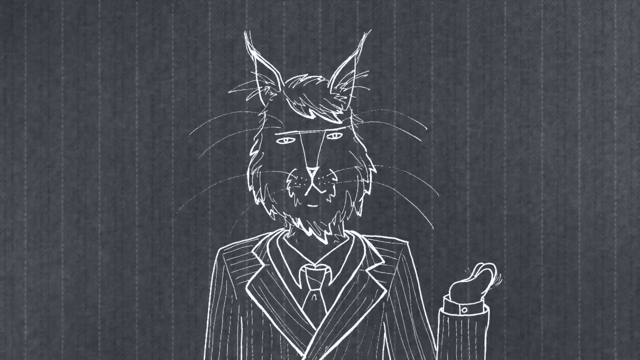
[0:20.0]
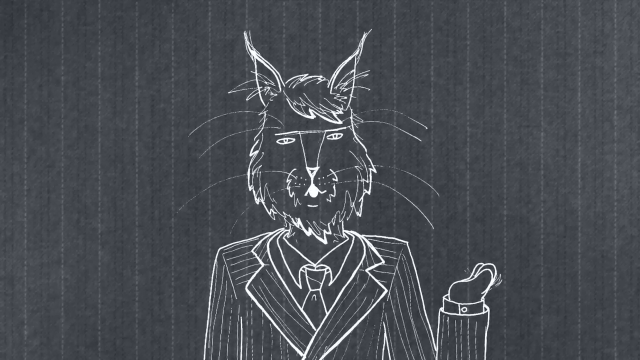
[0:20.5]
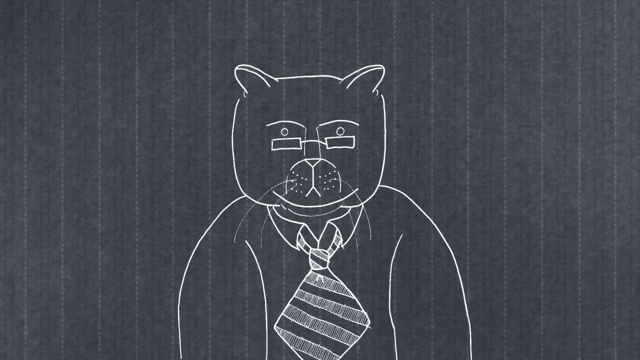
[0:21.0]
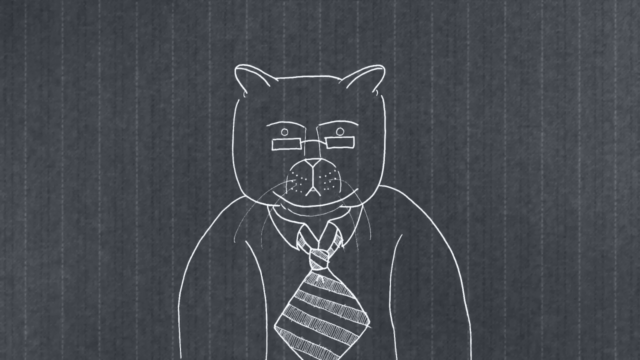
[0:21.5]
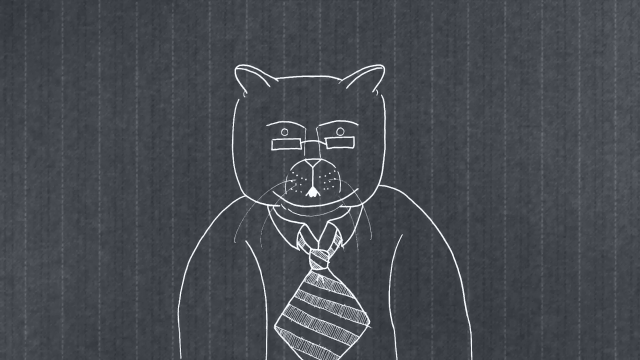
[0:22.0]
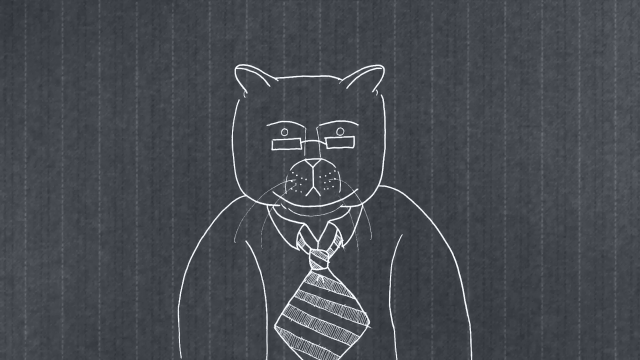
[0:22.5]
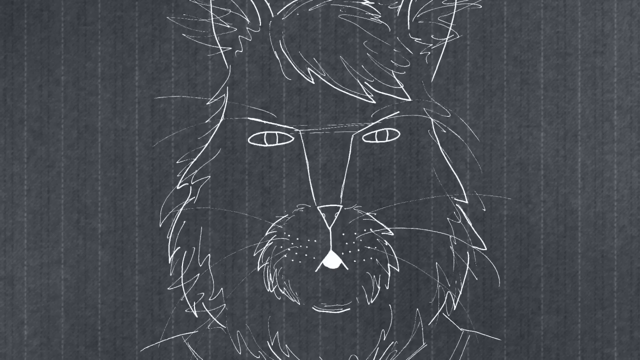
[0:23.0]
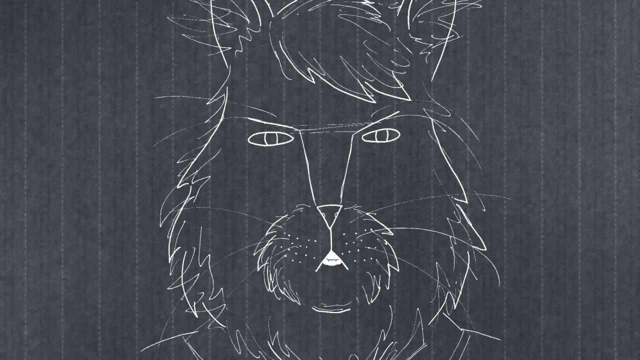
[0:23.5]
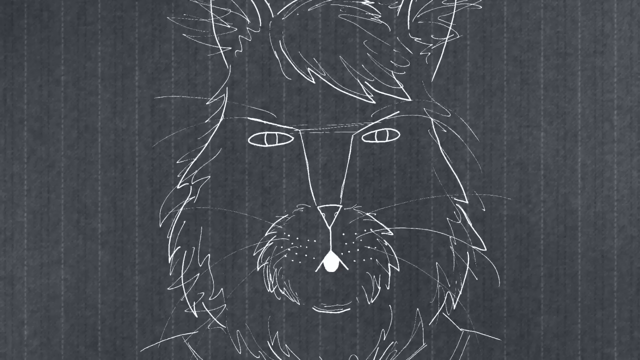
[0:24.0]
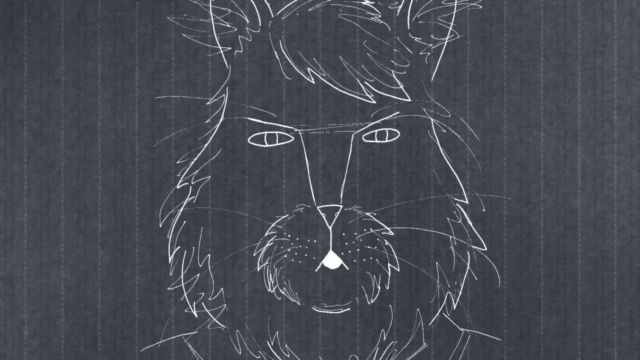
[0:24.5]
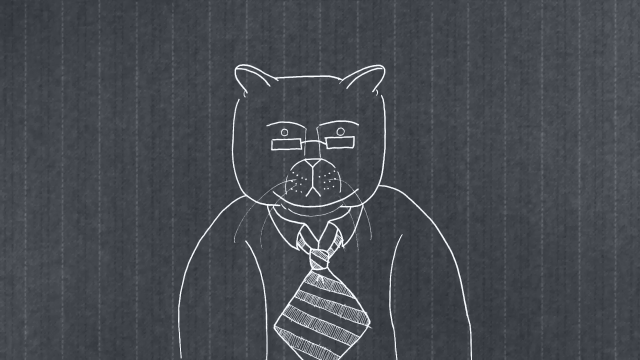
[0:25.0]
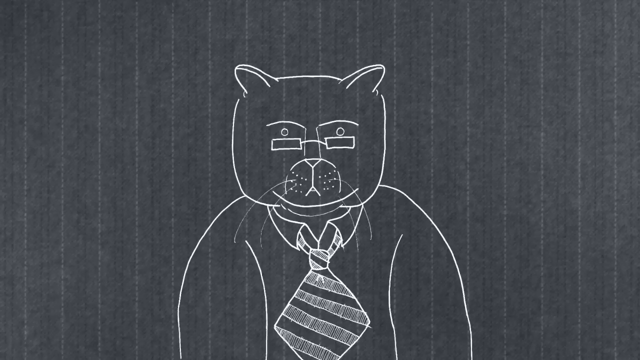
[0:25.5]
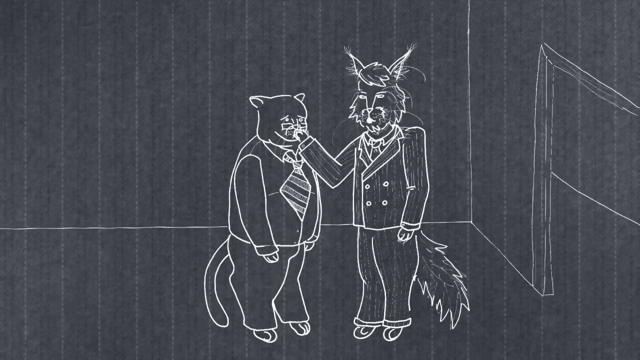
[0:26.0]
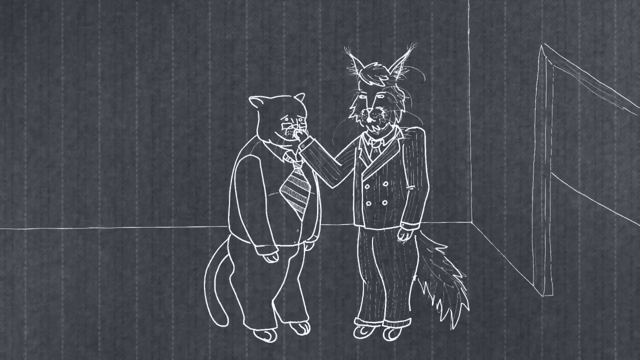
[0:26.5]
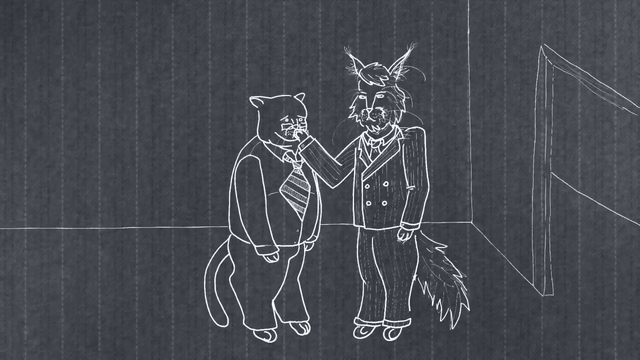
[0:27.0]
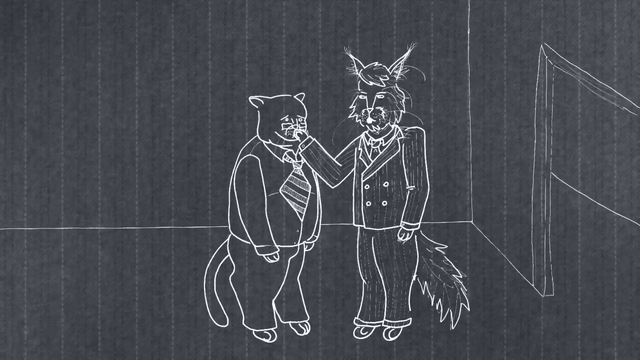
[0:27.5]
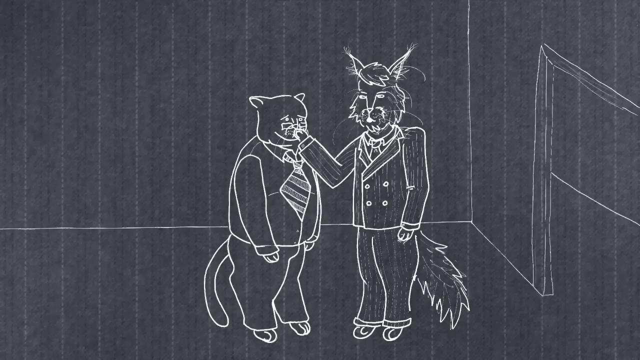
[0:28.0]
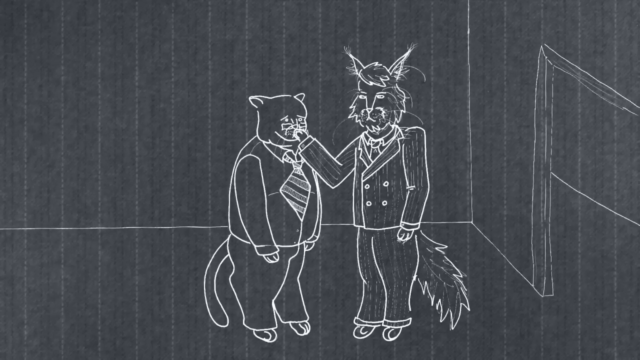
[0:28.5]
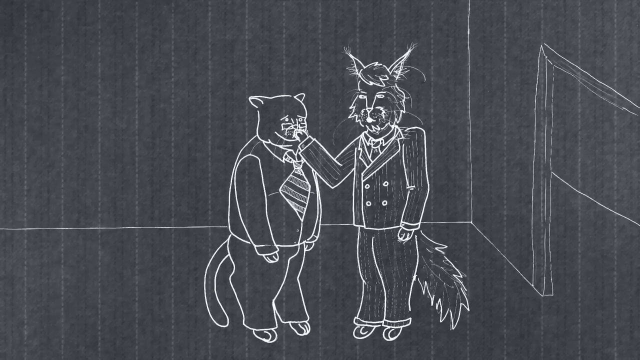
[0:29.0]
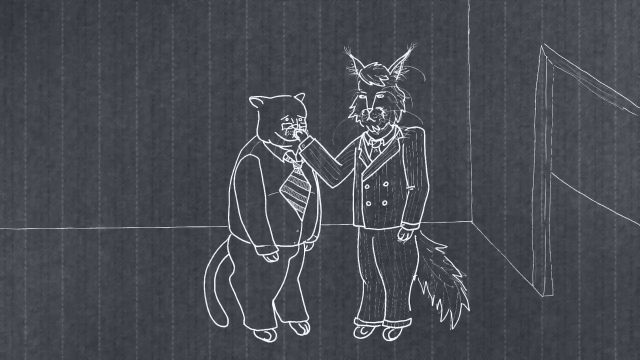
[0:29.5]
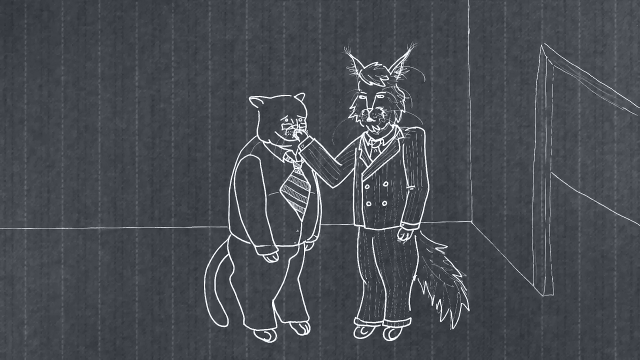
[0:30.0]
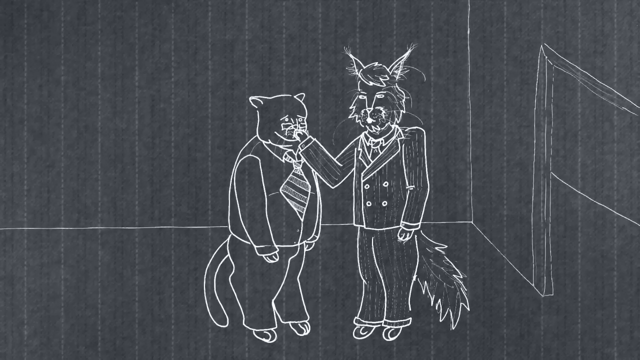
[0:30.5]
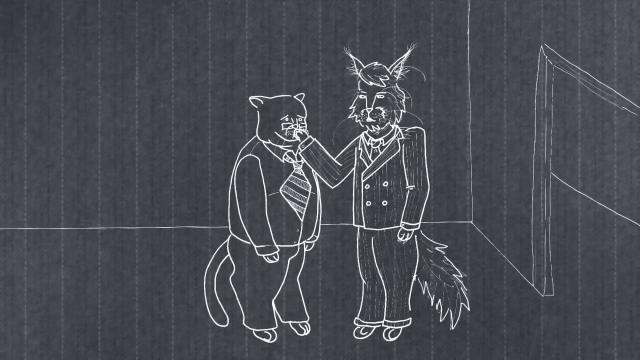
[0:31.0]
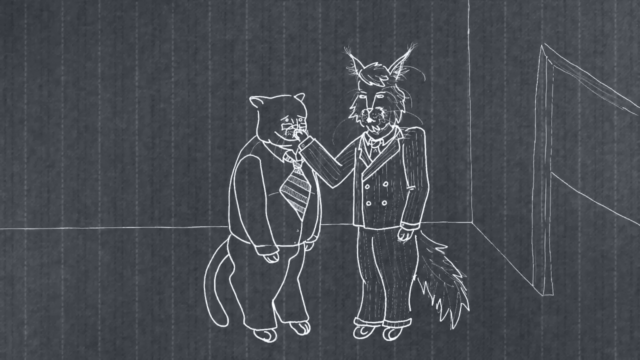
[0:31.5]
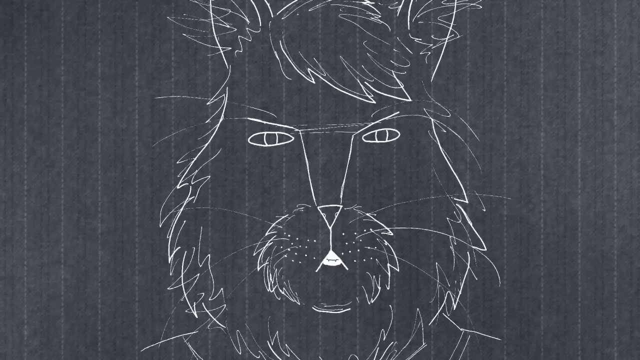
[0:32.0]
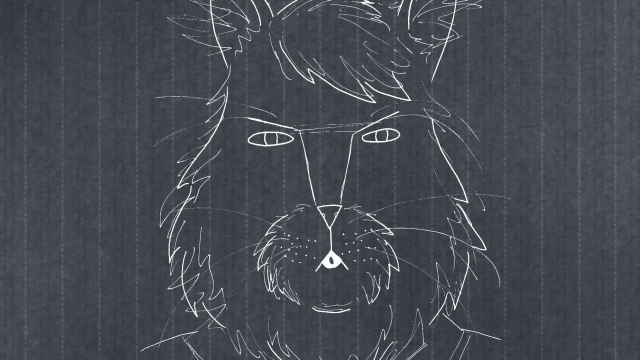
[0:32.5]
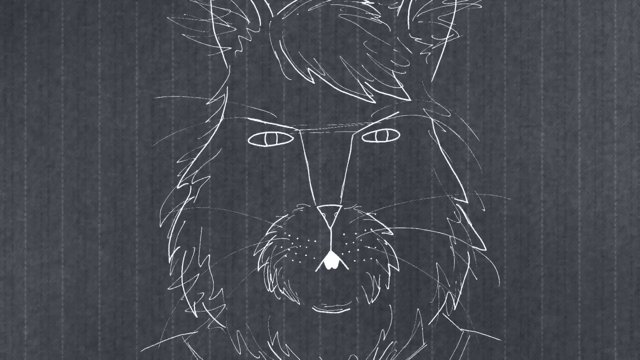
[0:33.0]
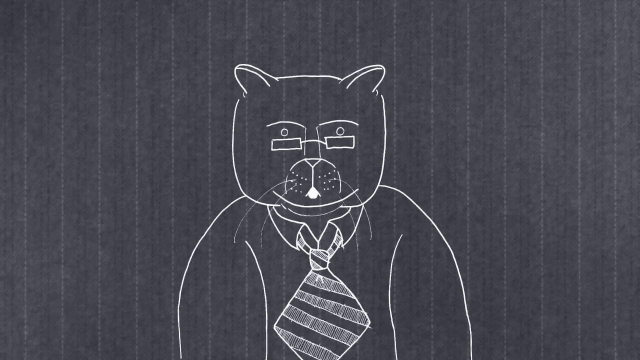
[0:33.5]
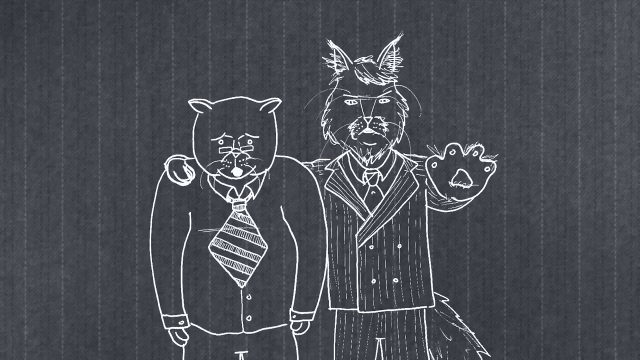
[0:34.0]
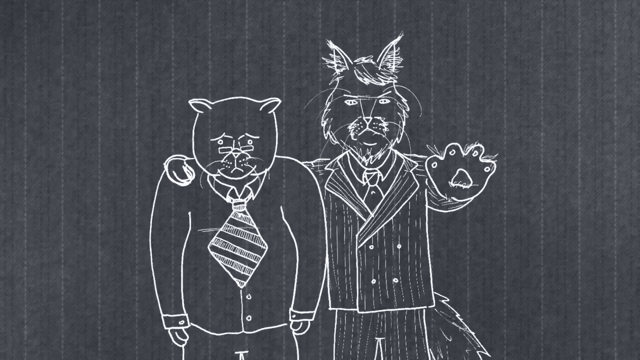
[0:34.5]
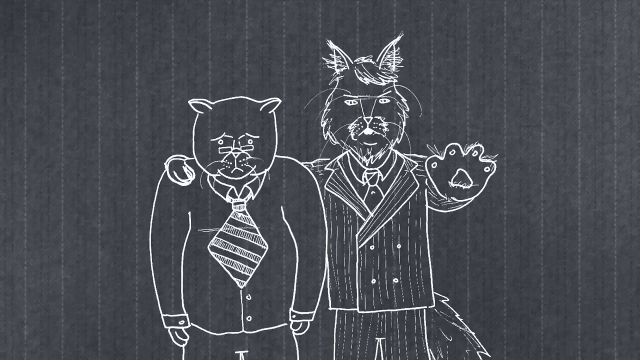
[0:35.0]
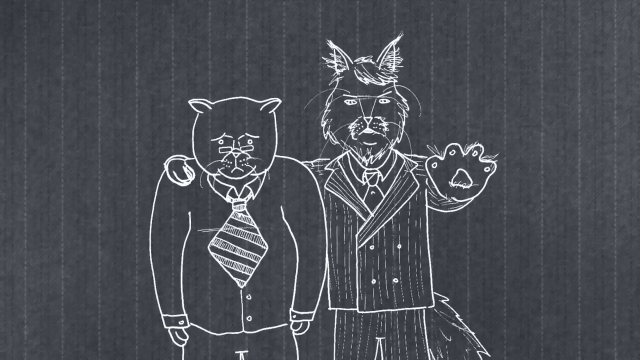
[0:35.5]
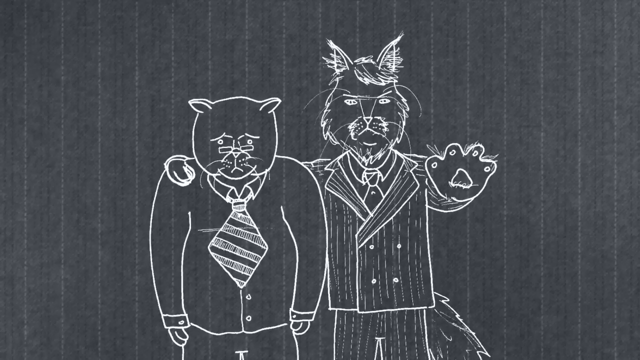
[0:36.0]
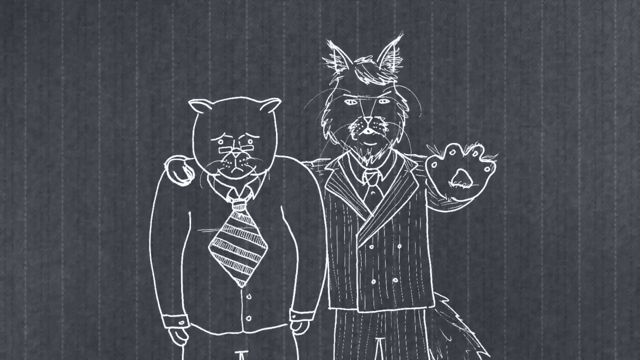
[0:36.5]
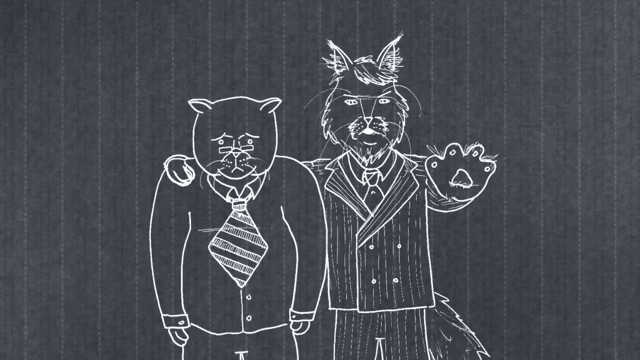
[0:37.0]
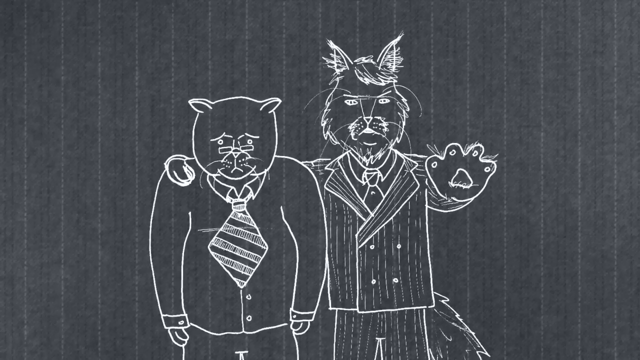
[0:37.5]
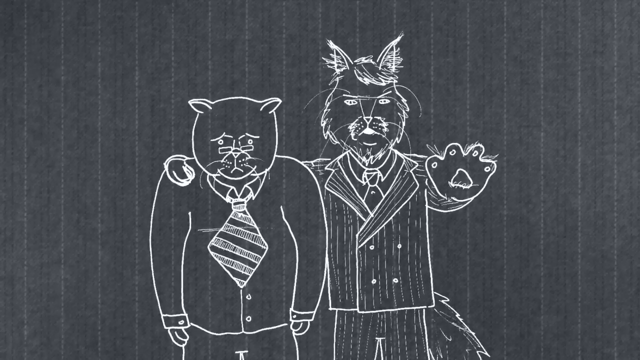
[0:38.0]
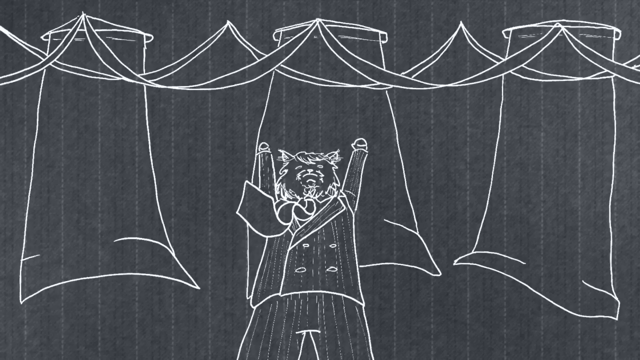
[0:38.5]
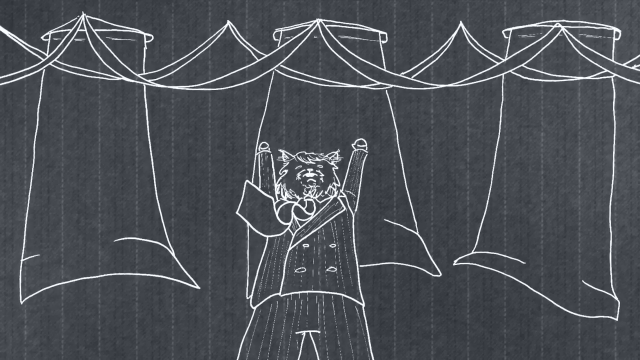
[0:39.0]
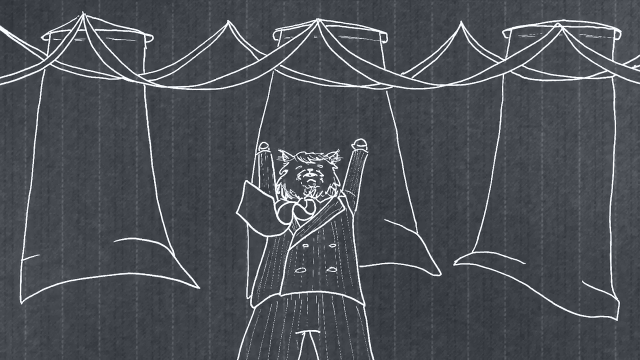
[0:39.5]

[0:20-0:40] The animation's figures are drawn entirely with white lines against a gray backdrop that has thin, dotted white lines running through it, making it look almost like a fabric texture. The characters are anthropomorphic cats wearing suits and ties. One cat has a very fluffy face and tall, pointy ears and wears a suit and tie; the other has a square face and short ears and wears a wide tie with just a shirt. They appear to be having a conversation, their mouths appearing to move while nothing else does. Their faces are shown, and then the two stand next to each other, the long-eared cat with his arm around the other cat's shoulder while the other cat looks a bit sad. Next, the long-eared cat raises his hands above his head as if in victory, with banners with ribbons attached hanging from the wall behind him.